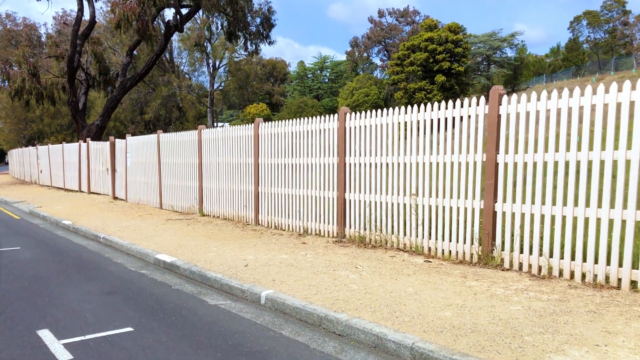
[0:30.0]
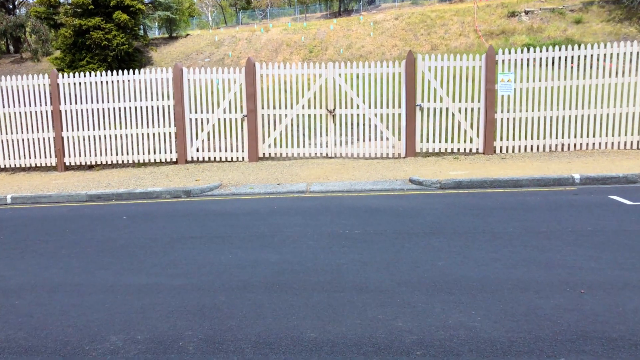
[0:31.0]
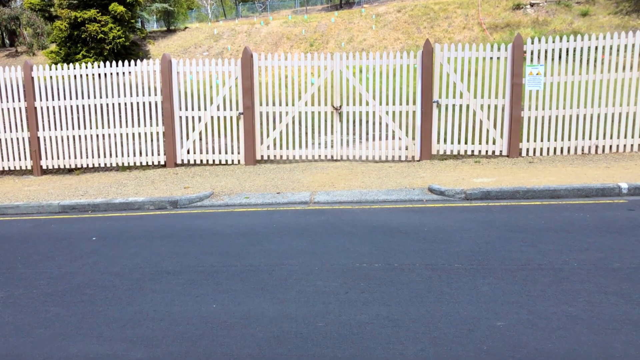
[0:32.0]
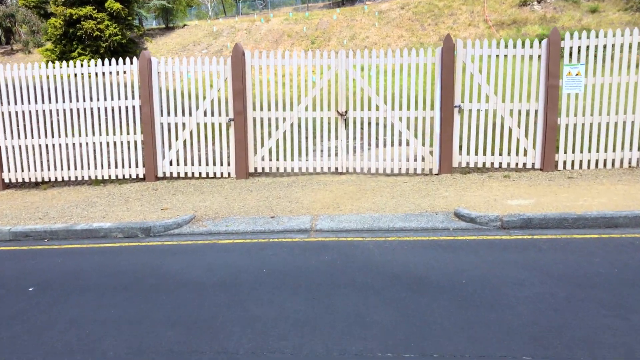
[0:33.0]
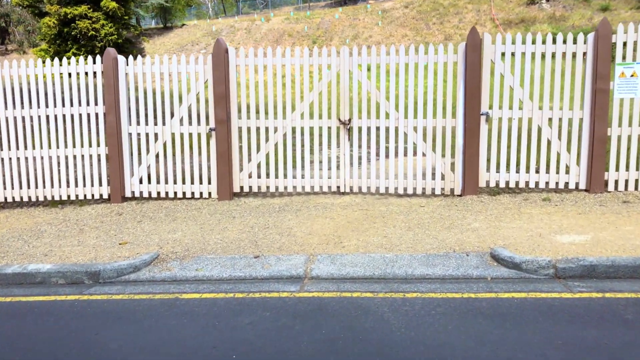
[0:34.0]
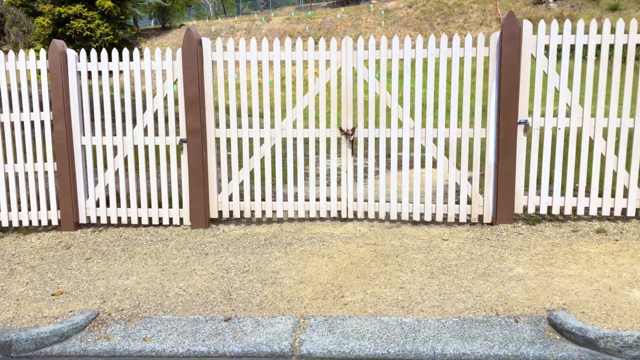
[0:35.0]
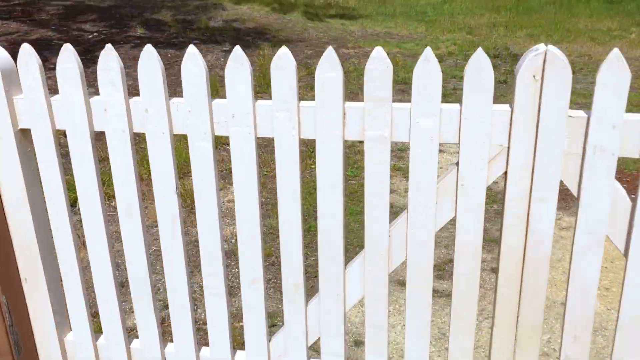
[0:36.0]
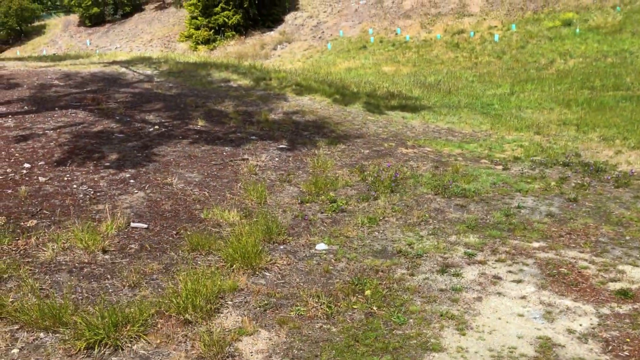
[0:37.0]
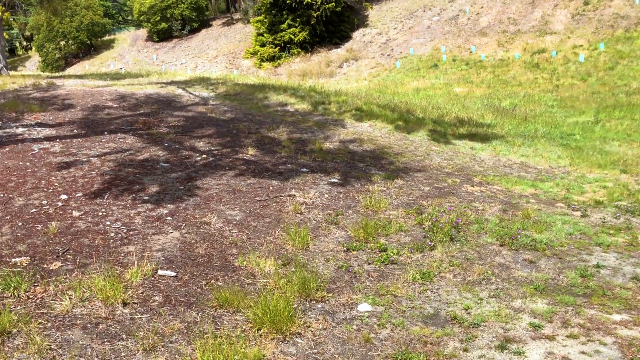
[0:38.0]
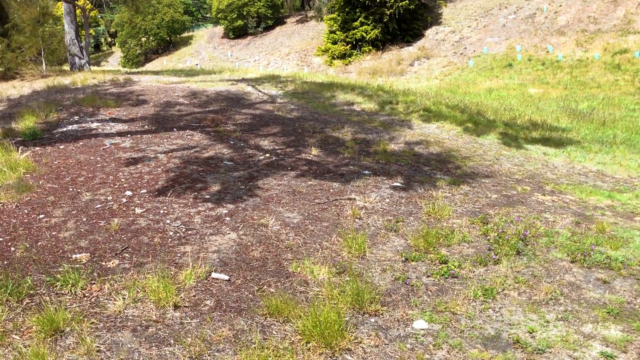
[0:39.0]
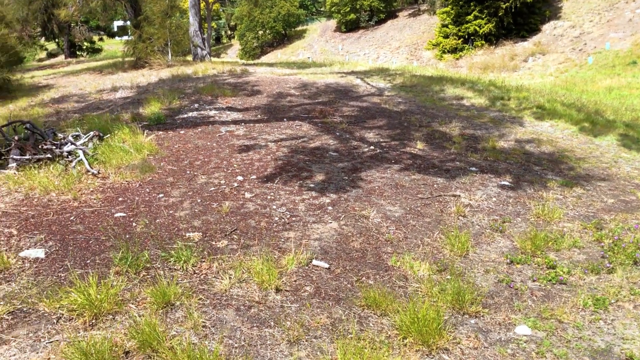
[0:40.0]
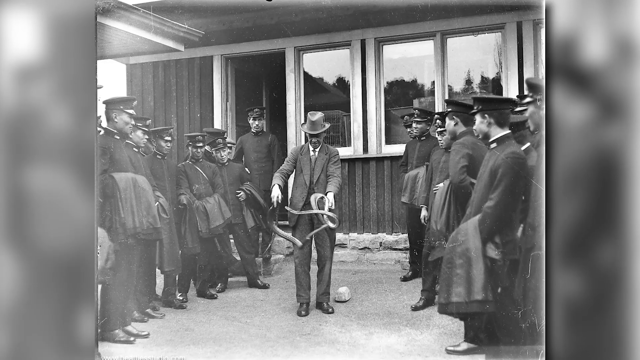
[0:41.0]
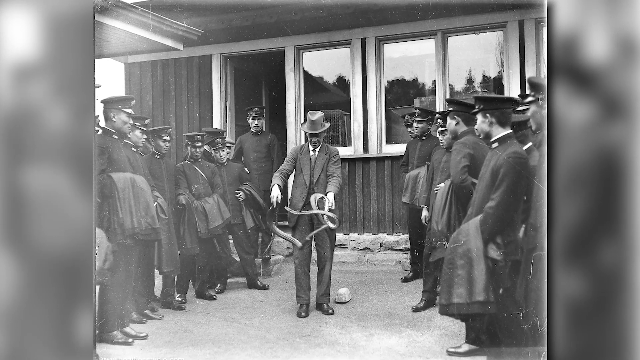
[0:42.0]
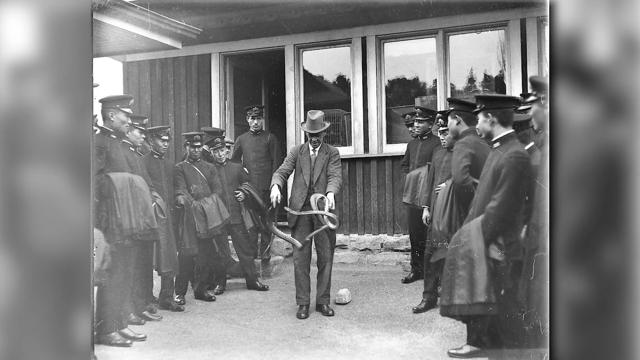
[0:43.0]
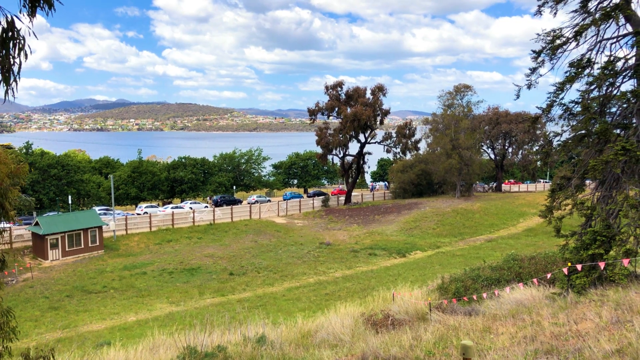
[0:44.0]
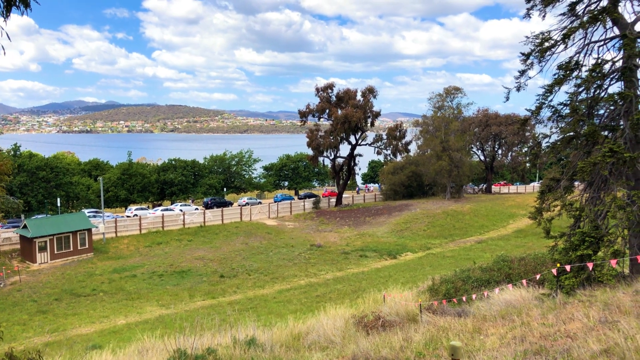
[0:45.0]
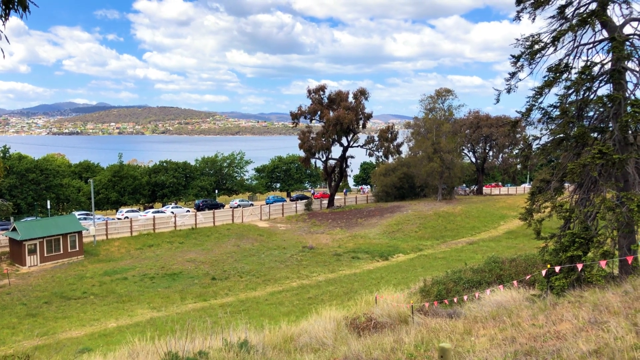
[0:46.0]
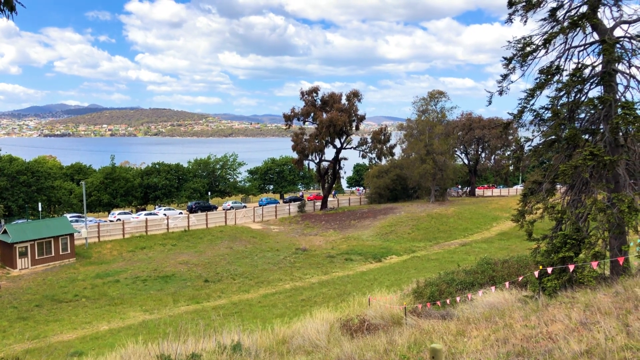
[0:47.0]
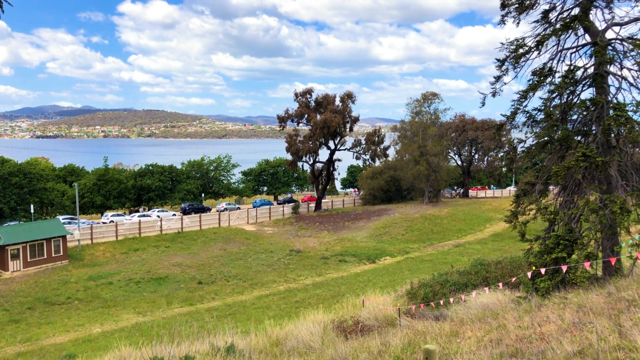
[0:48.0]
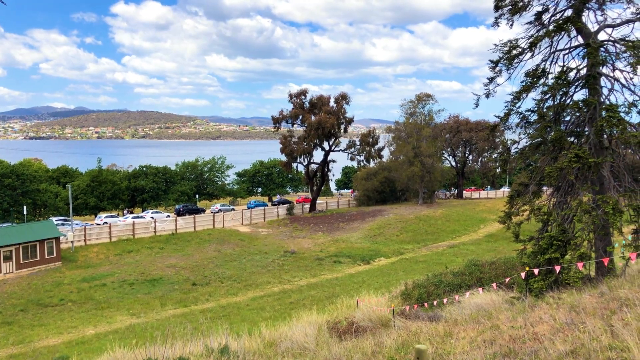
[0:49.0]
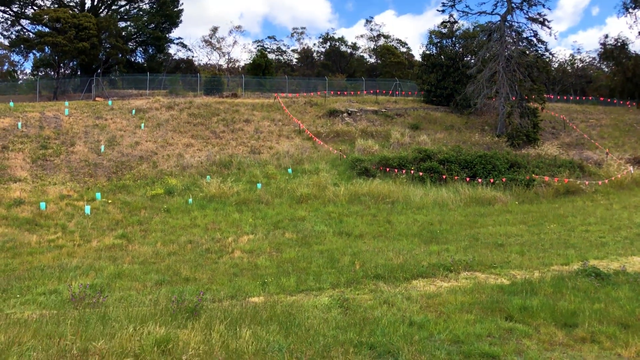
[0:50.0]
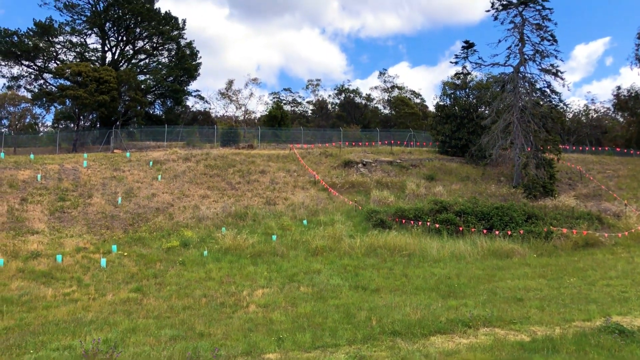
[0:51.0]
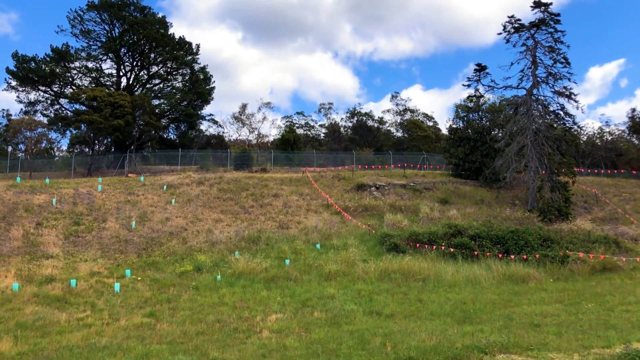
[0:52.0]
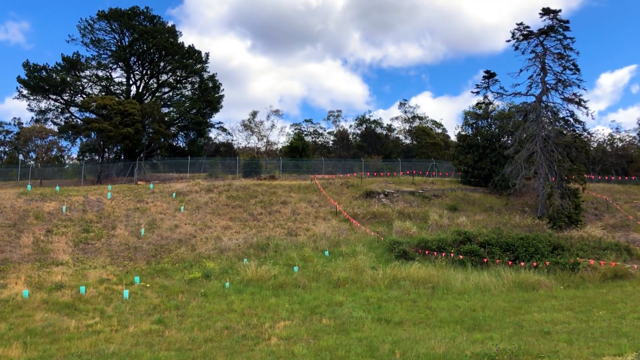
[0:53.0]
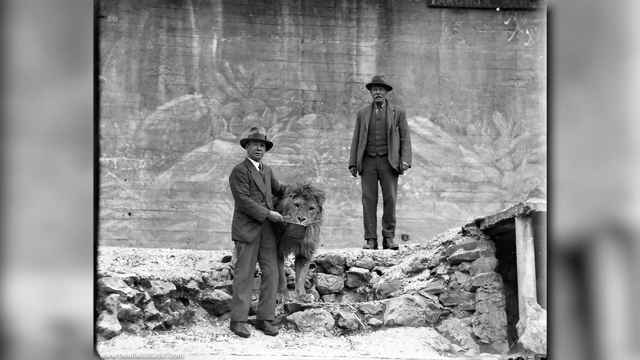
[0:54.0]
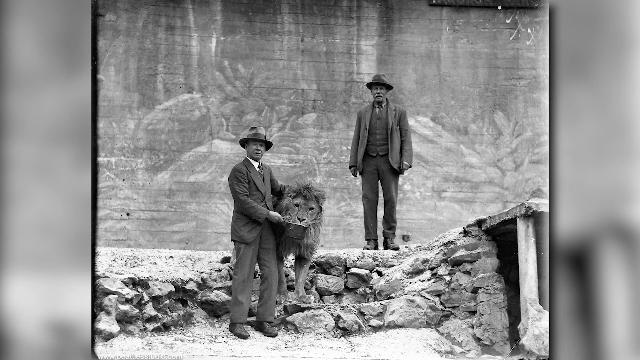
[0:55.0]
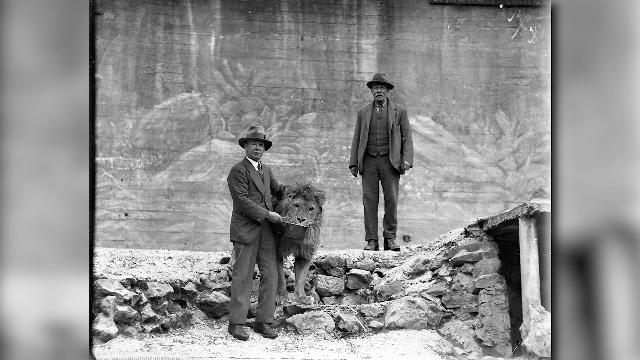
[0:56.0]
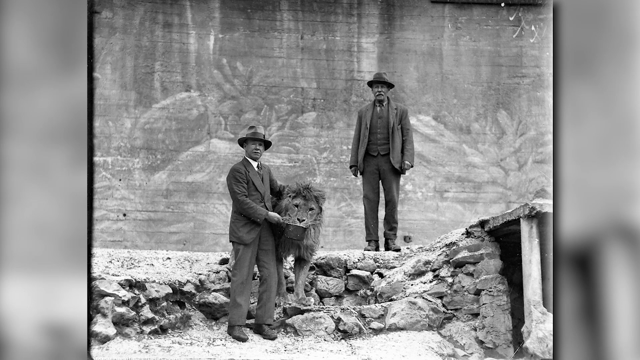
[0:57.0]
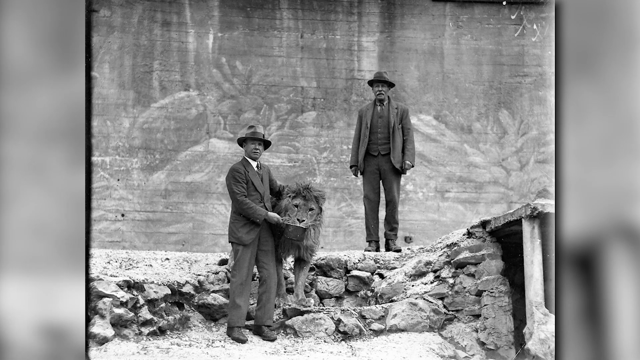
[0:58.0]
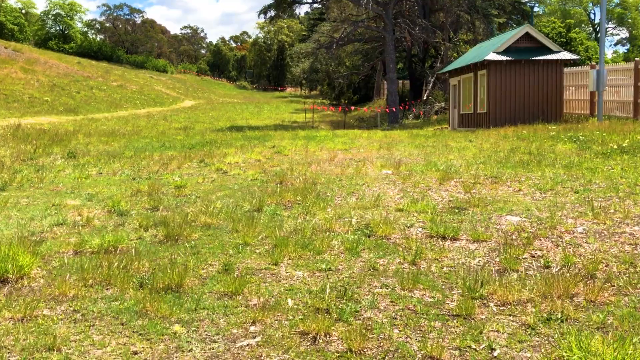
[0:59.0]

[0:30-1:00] A white picket fence is in the center, with the side of a road at the bottom and a sidewalk between the road and the fence. Beyond the fence is a very dry grass field, with a green tree on the left side in the background. The view zooms in and progresses forward toward the fence, then the scene moves above the fence onto the dry grass area, showing dirt and grass as the camera moves to the left. A black and white still photo then shows a man with a snake, or snakes, in his hands, doing some sort of show. He stands in the middle, wearing a suit and a hat and looking downward at the snake, while people watch him from the left and right sides; these onlookers appear to be police officers, dressed in black uniforms and police hats. The scene changes to what looks like the outer area of the zoo: a grass field and a horizontal road lined with parked cars. In the distance is a lake or river, and beyond the water is what looks like a mountain range and another area of land, under a blue sky with white clouds. Next comes another grassy area with dried-up grass on the ground and what appears to be a chain-link fence and some trees in the distance. A black and white photo then shows a man wearing a suit with a lion; they look like they are feeding the lion. Another man stands in the background on the right, and both men are looking toward the camera. The scenery changes to a green grass field as the camera progresses forward.